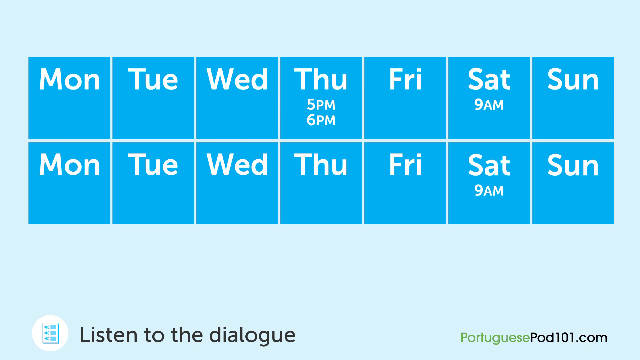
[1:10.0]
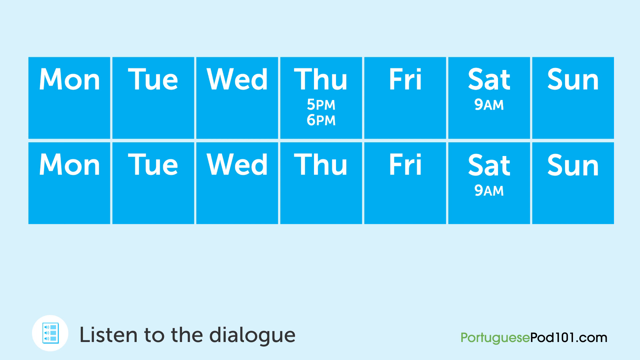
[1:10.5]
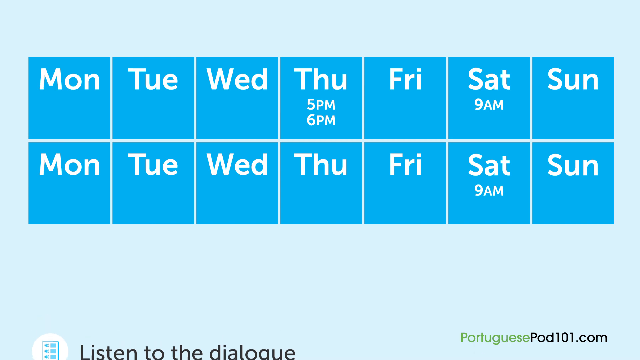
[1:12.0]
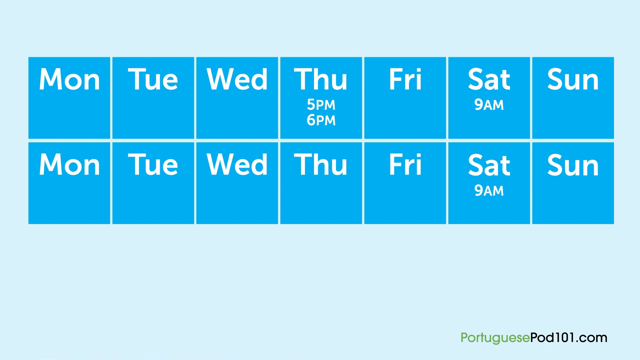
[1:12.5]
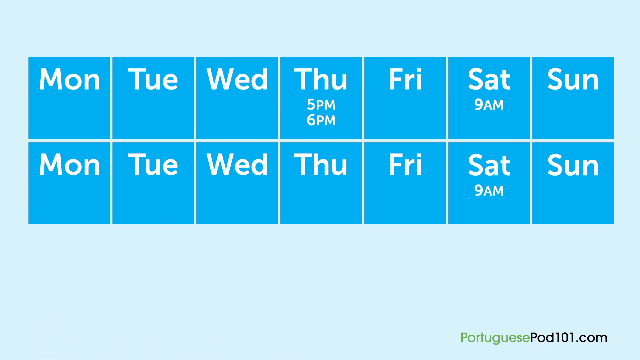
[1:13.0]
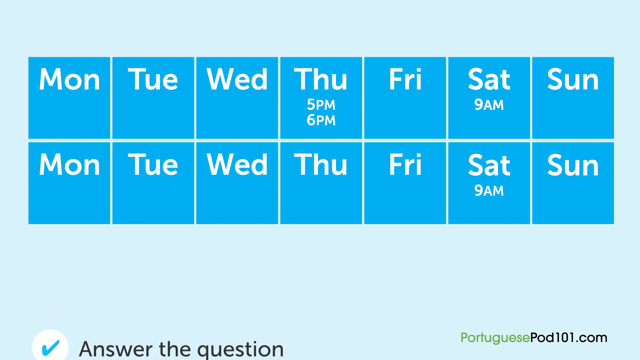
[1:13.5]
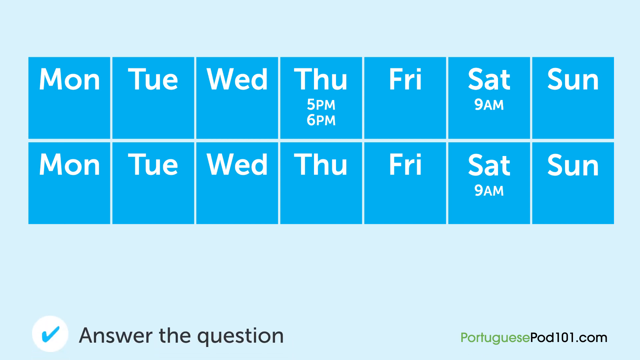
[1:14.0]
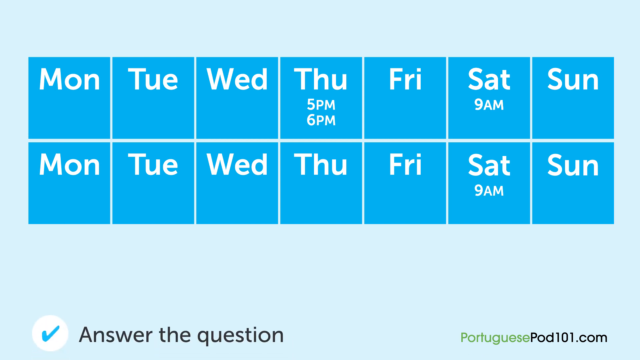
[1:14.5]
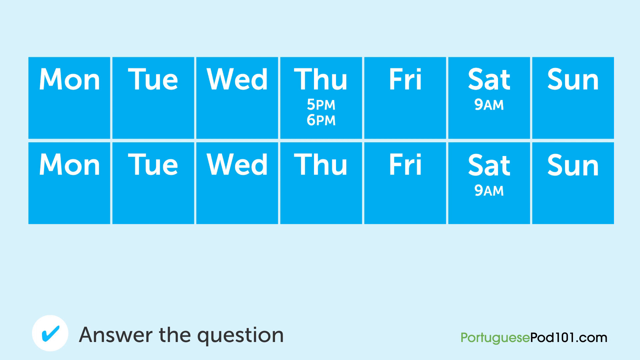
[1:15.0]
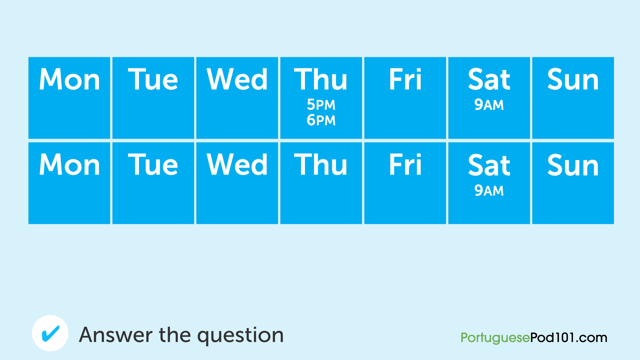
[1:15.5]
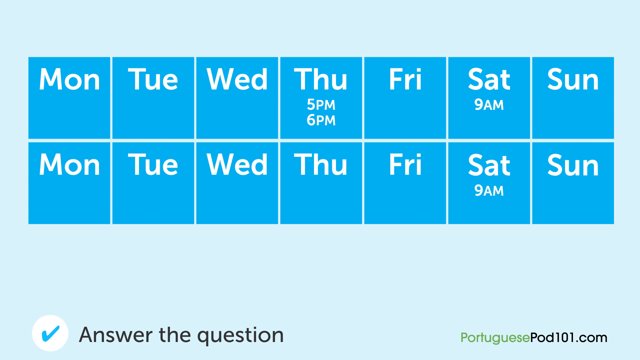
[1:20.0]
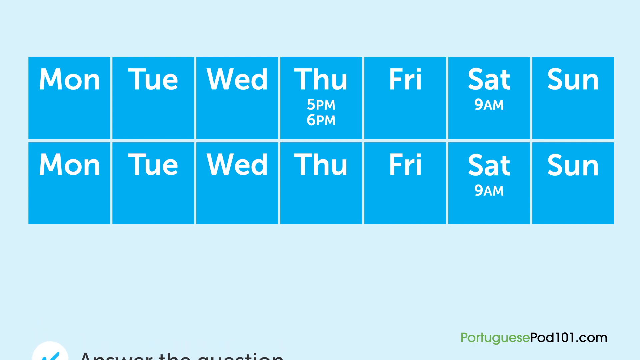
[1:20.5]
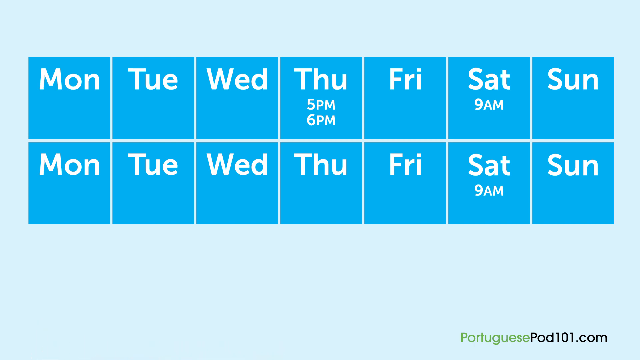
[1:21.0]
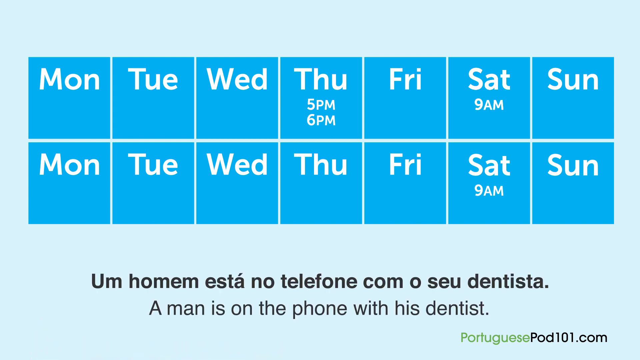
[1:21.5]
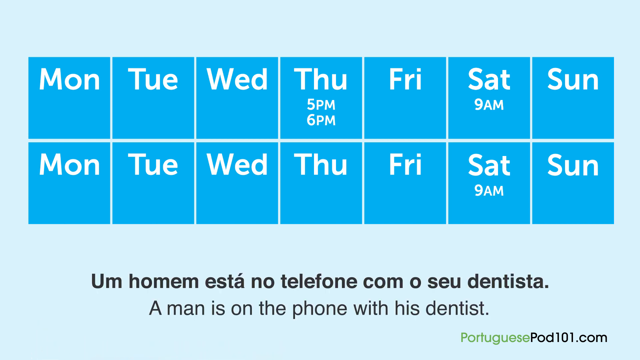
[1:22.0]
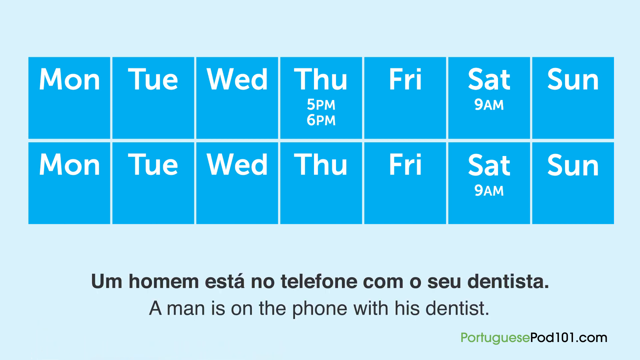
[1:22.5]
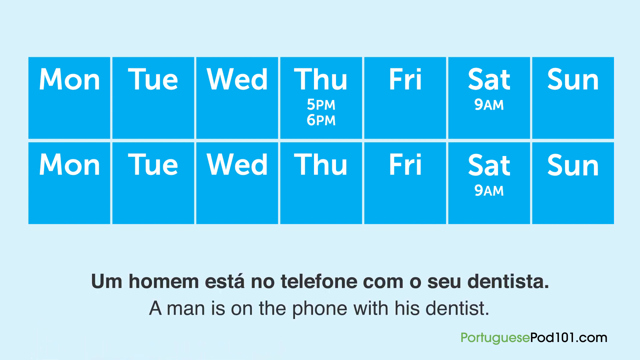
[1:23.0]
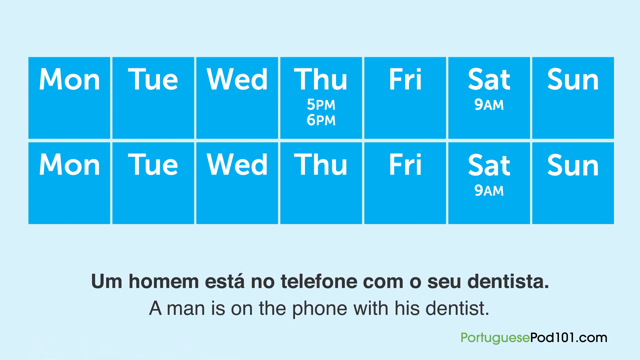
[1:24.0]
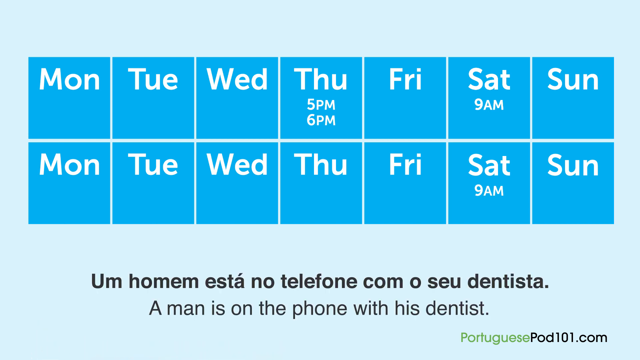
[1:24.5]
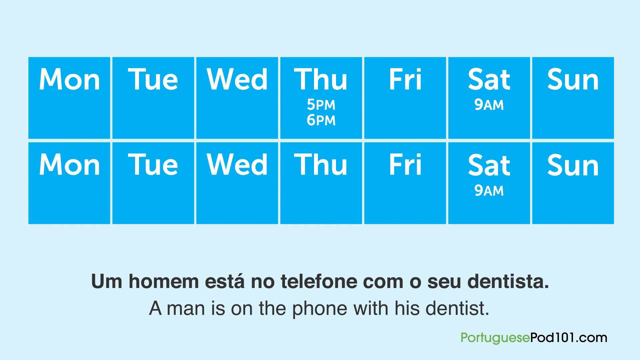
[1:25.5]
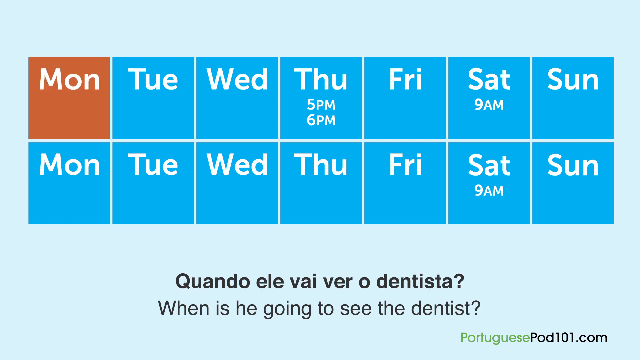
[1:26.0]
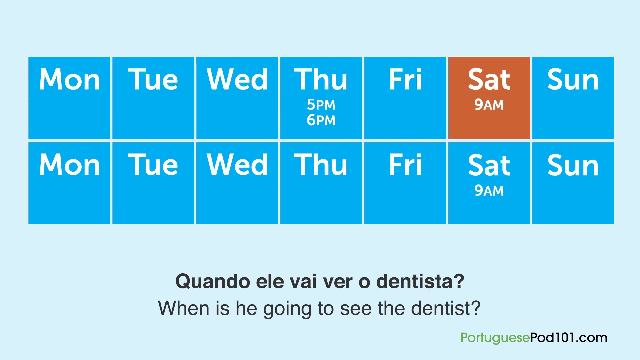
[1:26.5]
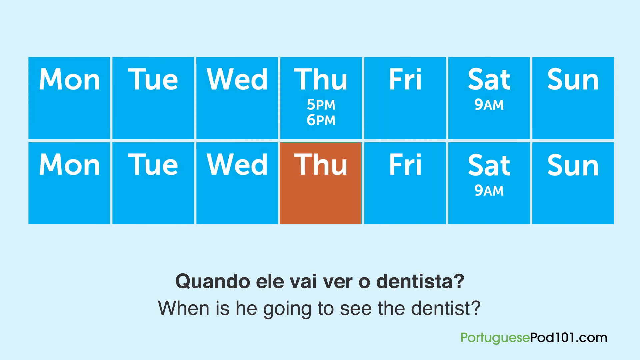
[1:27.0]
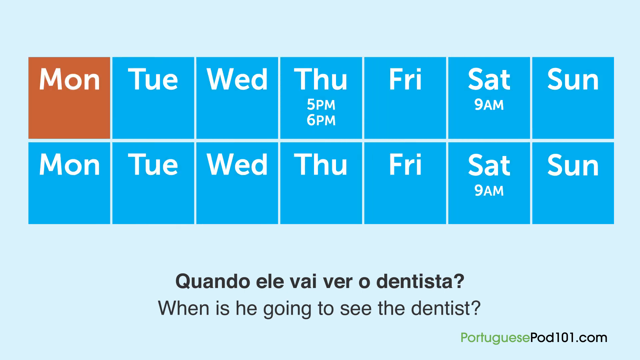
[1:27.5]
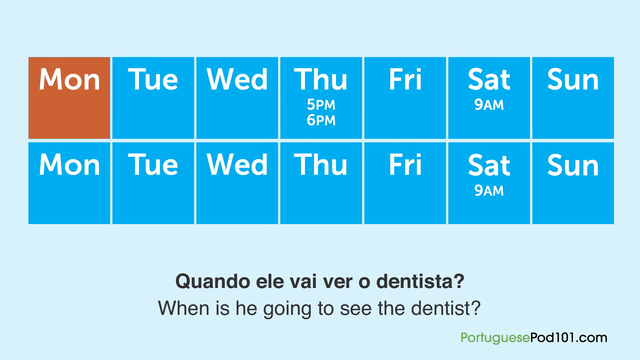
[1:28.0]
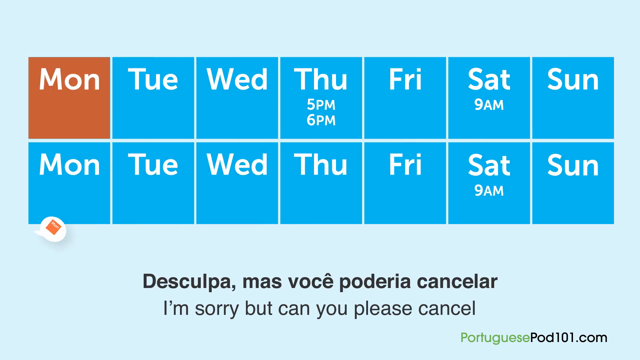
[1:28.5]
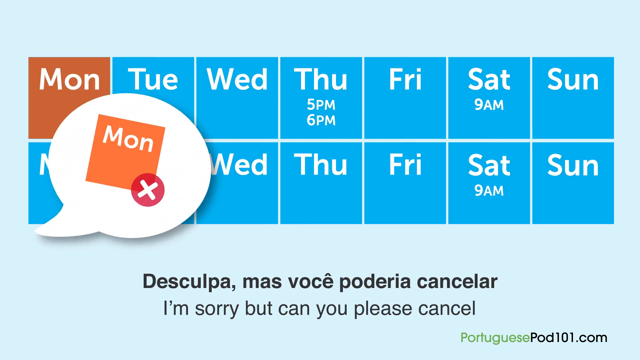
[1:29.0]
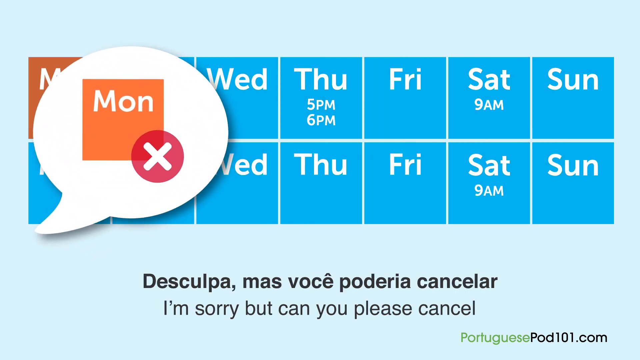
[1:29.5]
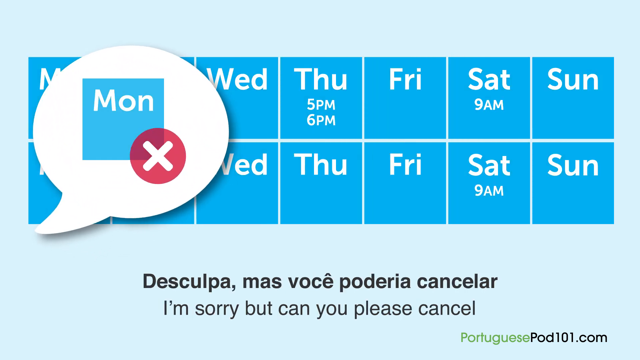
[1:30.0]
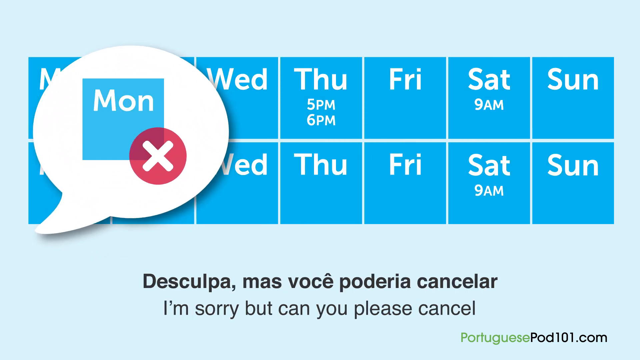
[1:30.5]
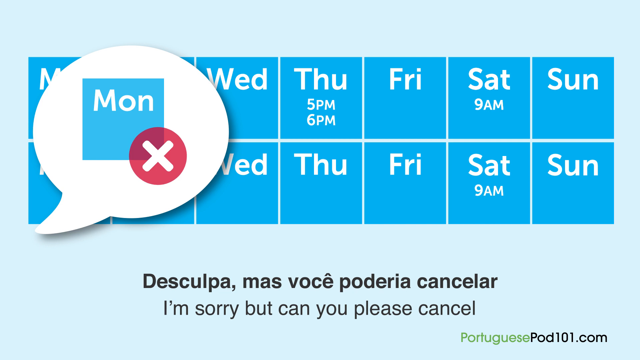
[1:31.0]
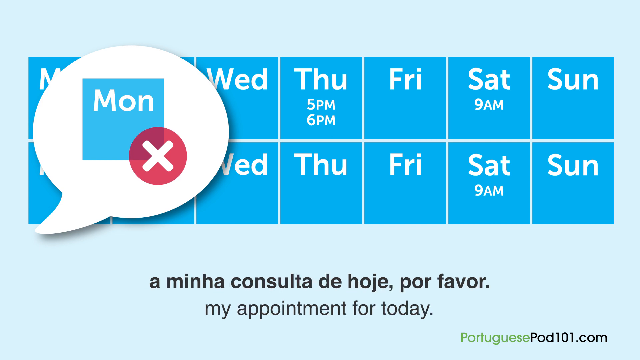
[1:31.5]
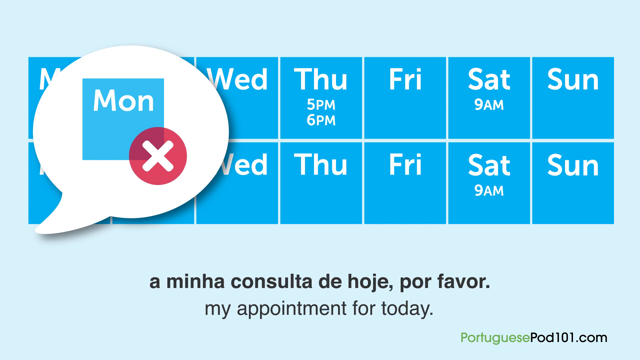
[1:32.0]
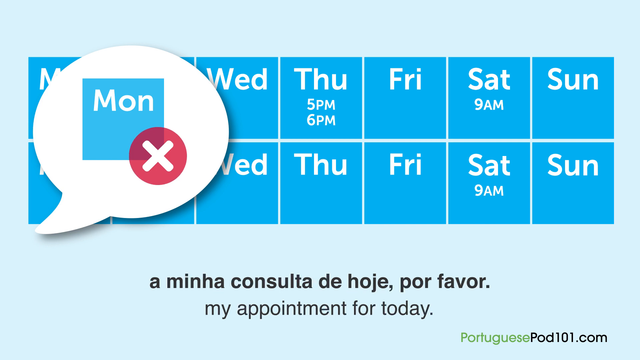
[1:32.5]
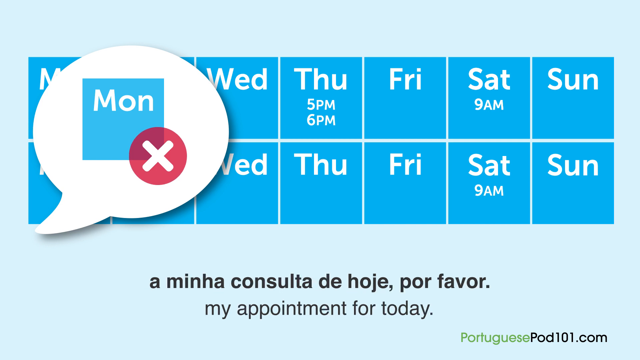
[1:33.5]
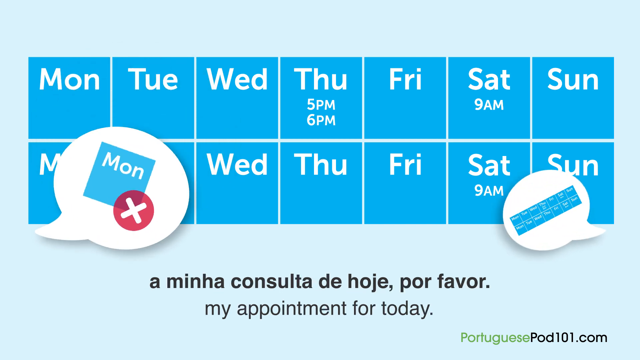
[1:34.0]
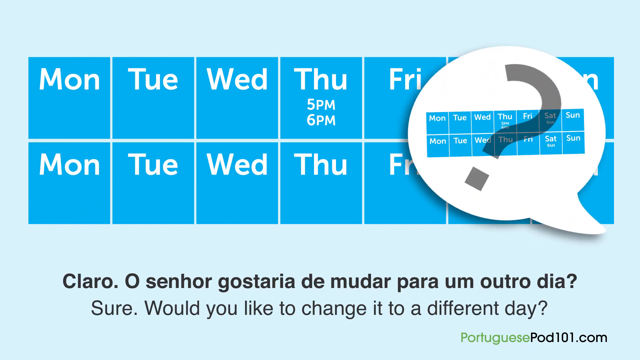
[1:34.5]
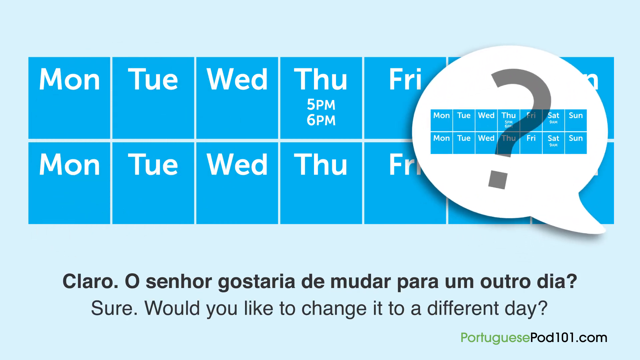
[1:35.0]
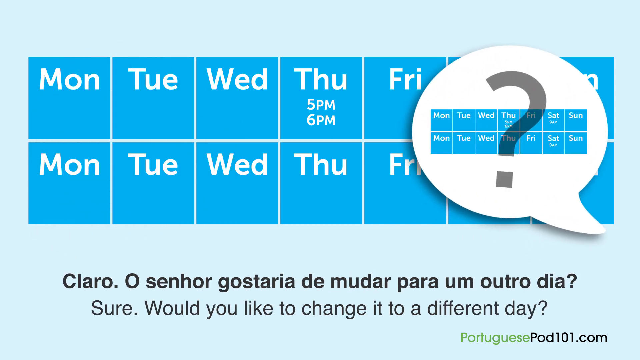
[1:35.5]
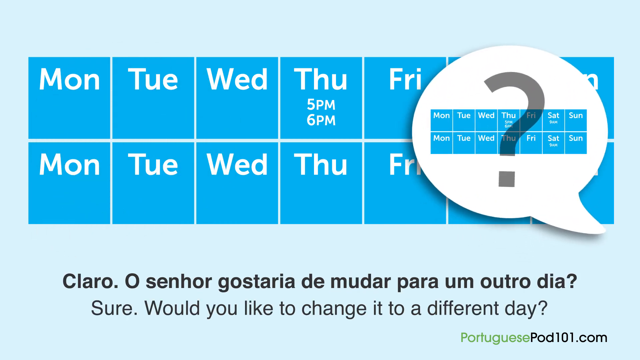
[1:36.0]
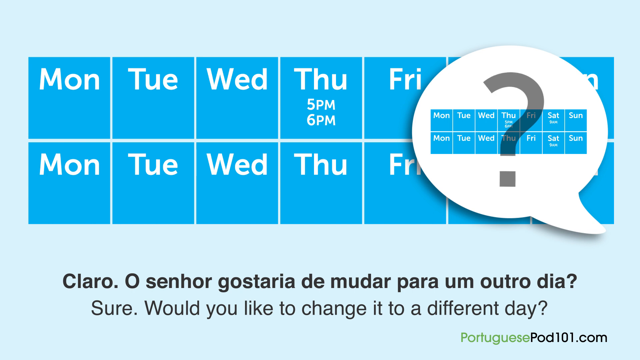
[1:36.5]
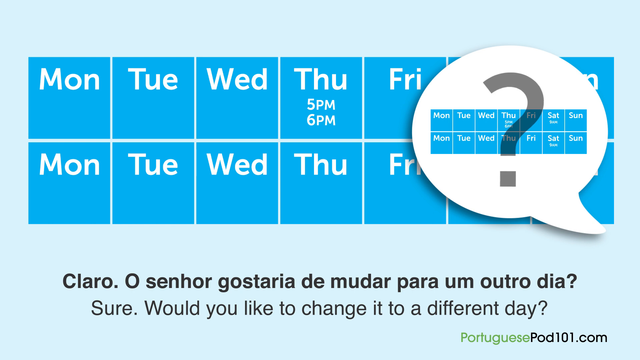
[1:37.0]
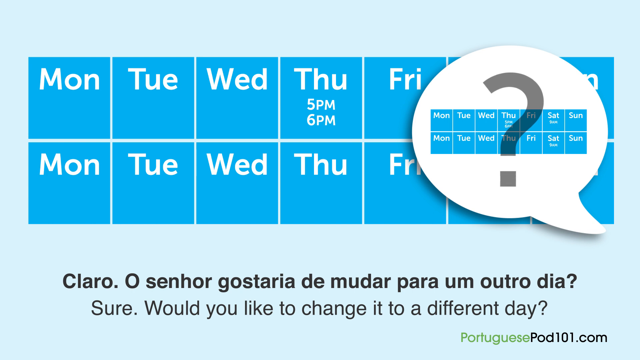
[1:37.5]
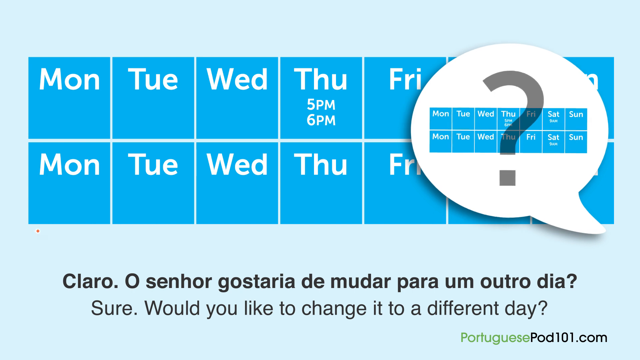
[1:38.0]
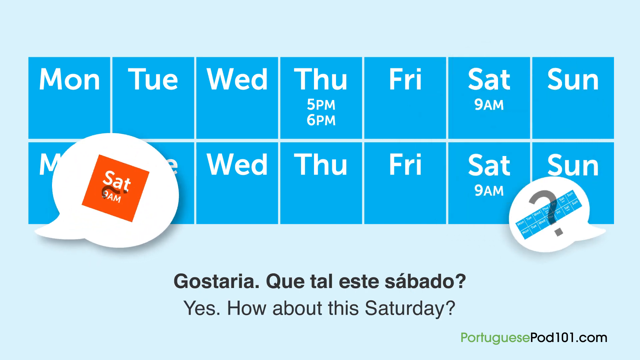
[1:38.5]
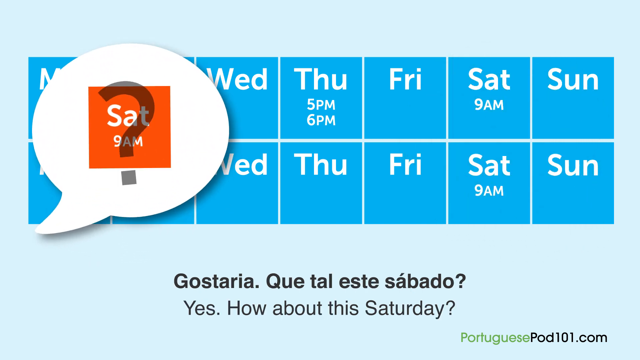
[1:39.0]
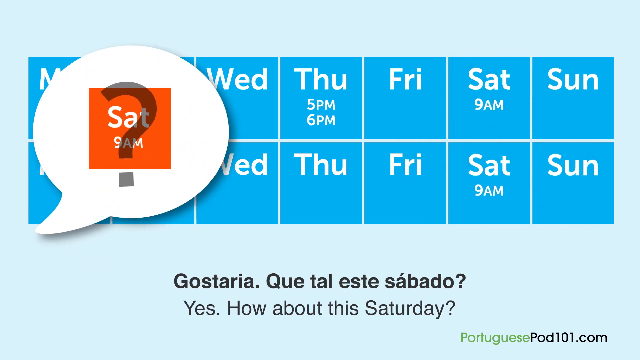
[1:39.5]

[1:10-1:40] The calendar continues to be shown with more about learning Portuguese, followed by pictures about the text and the schedule of learning. The three audio symbols gradually fade into a blue checkmark when the question is answered. Later, three sentences to be translated from Portuguese into English appear, along with a picture of a man on the phone; one sentence is about when he is going to see the dentist and one is about making an appointment to see the dentist. The Portuguese words are in bold black, while the English translations are not bold and are written in a small font underneath. In a speech bubble, an X is shown on the calendar for an appointment that cannot be made.